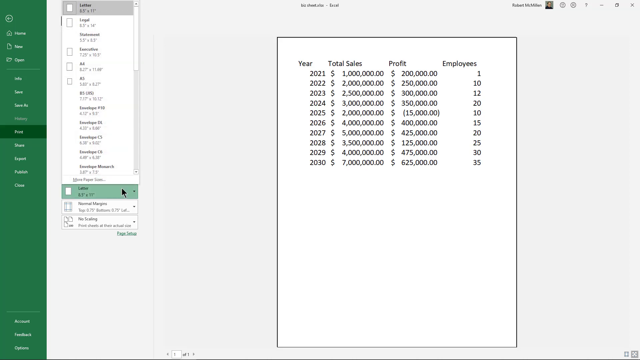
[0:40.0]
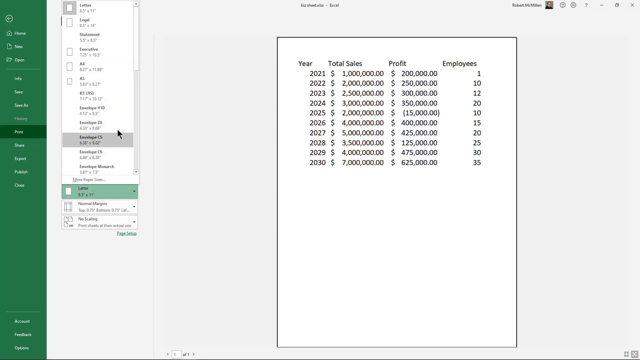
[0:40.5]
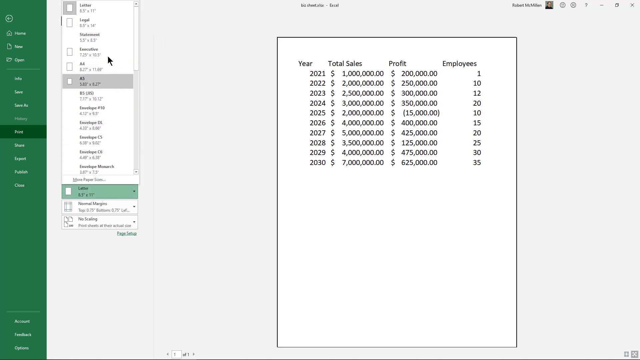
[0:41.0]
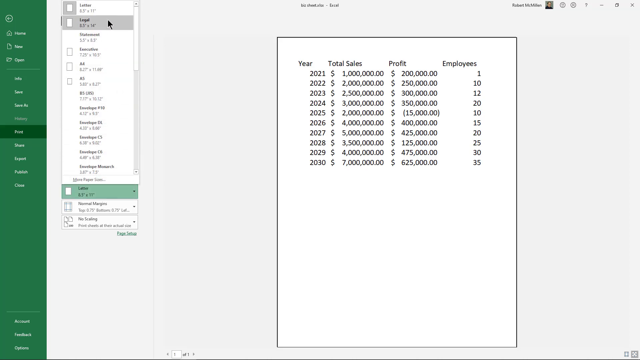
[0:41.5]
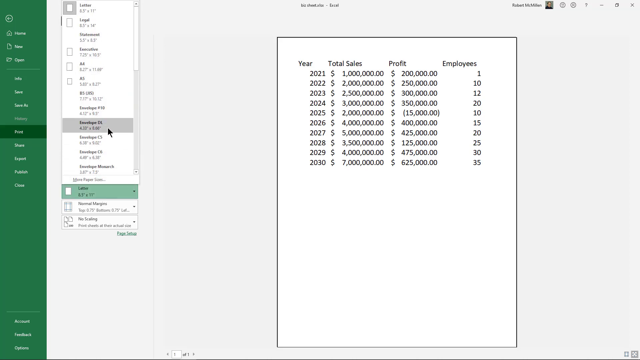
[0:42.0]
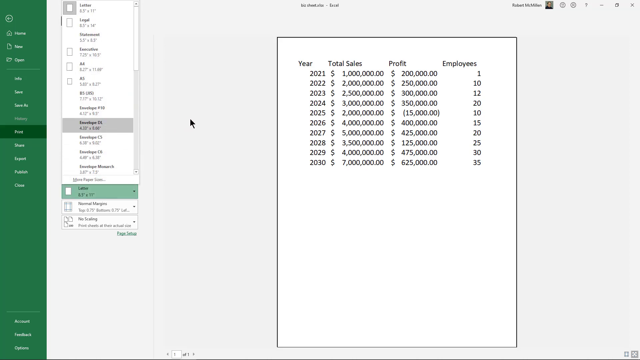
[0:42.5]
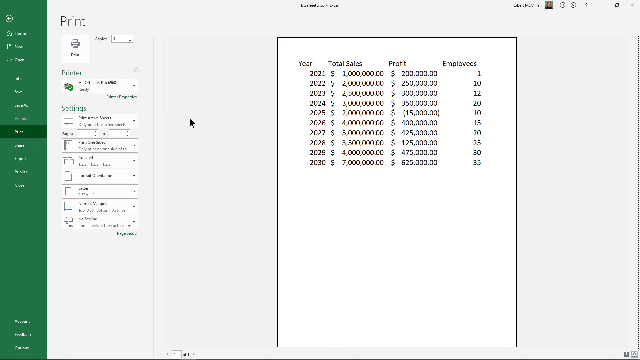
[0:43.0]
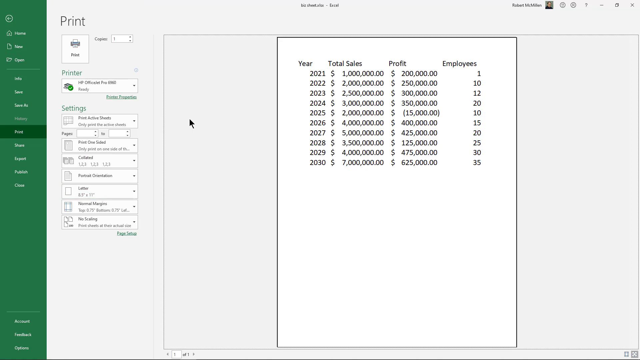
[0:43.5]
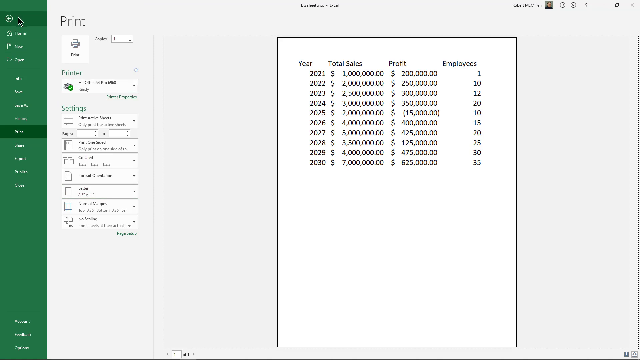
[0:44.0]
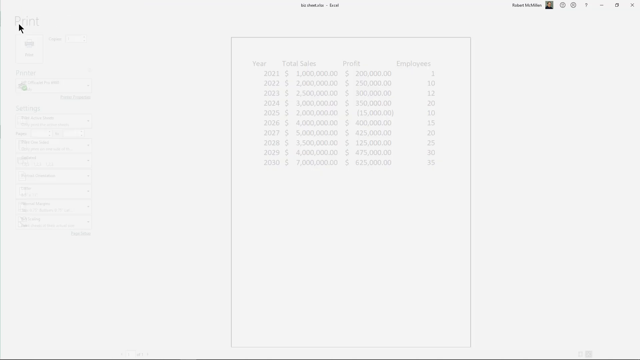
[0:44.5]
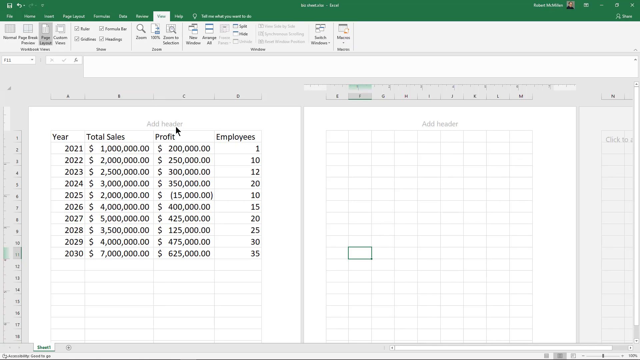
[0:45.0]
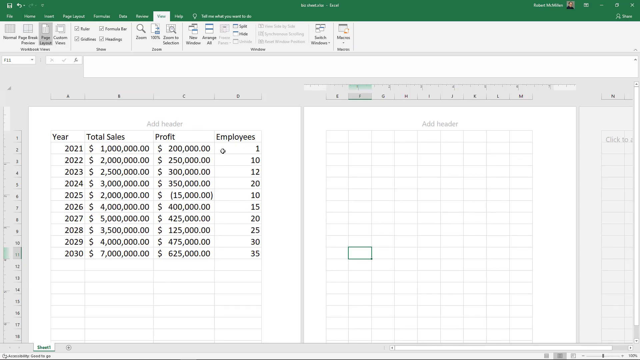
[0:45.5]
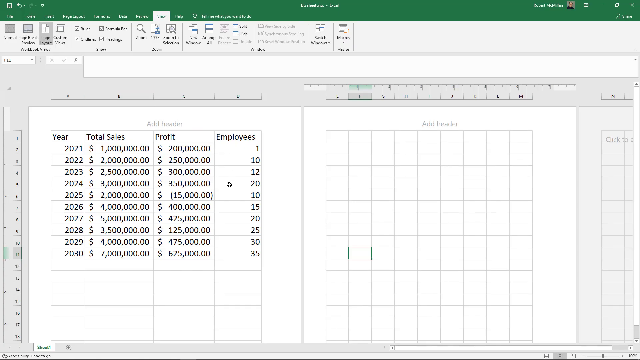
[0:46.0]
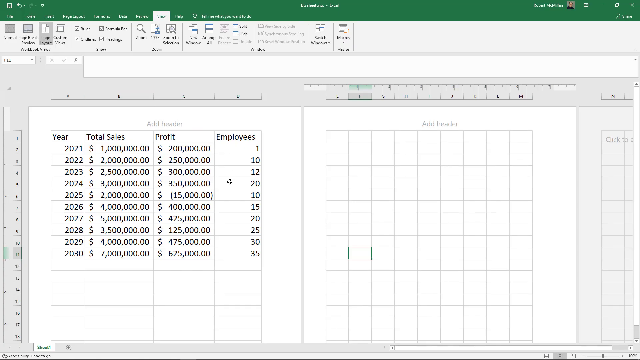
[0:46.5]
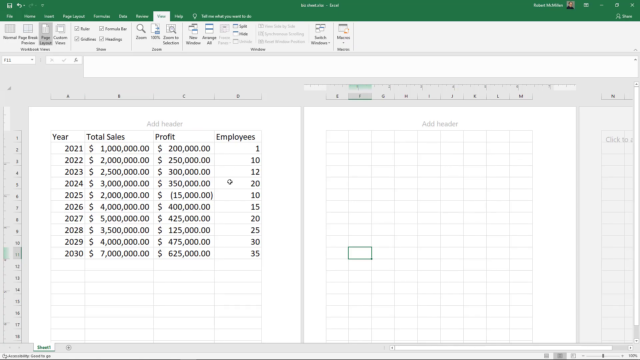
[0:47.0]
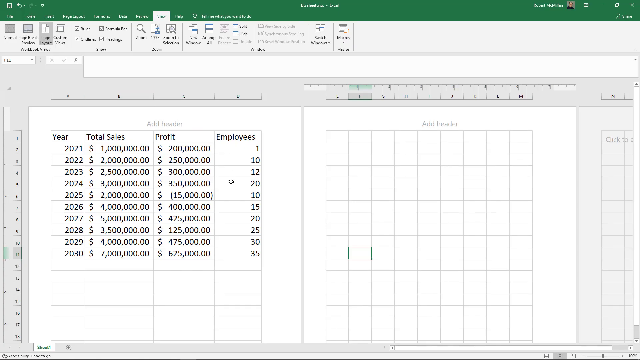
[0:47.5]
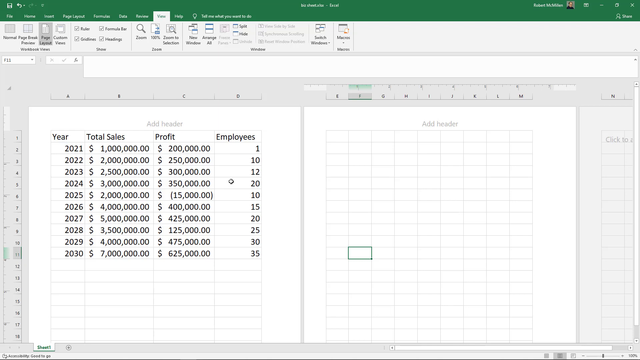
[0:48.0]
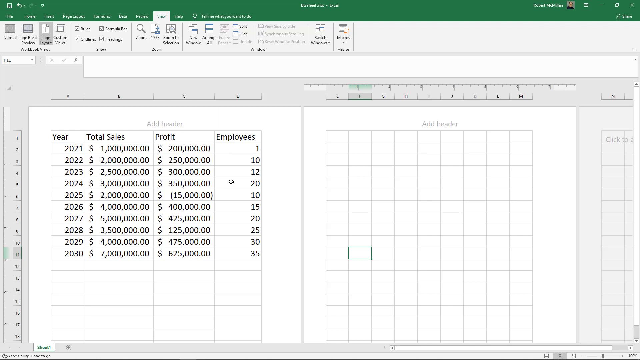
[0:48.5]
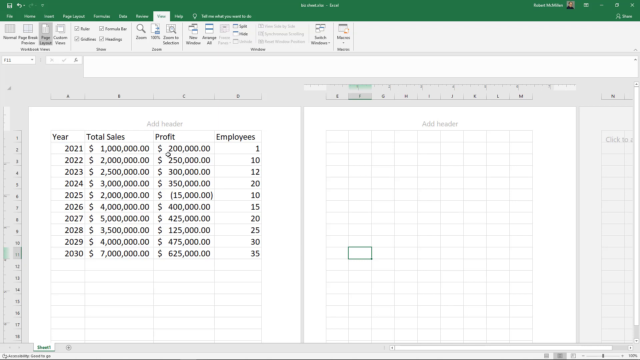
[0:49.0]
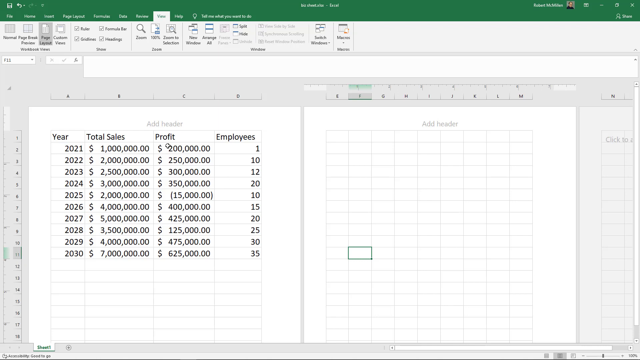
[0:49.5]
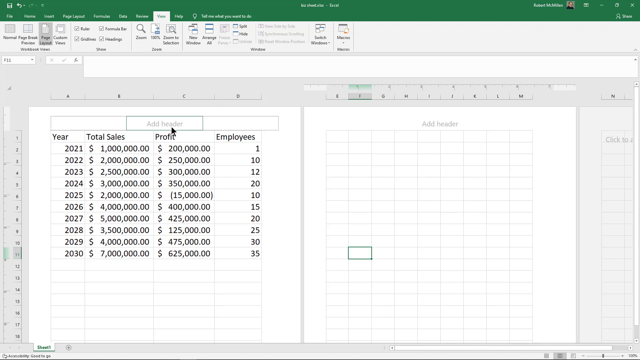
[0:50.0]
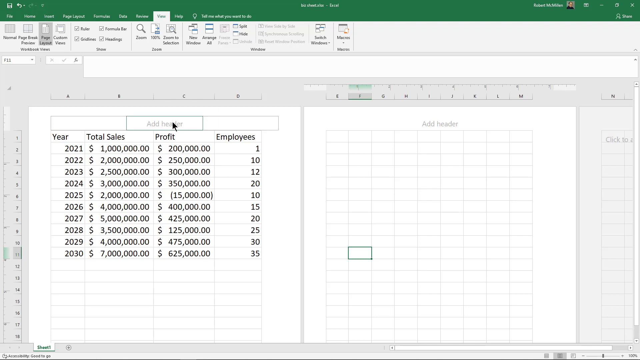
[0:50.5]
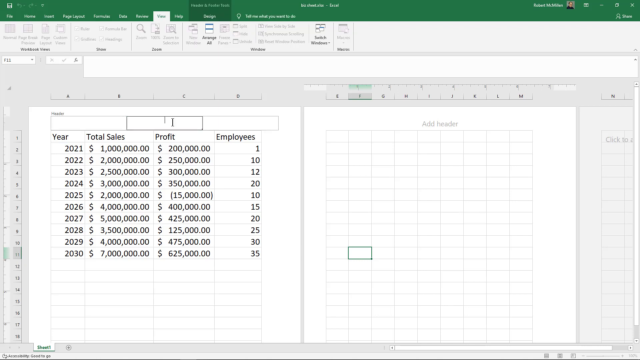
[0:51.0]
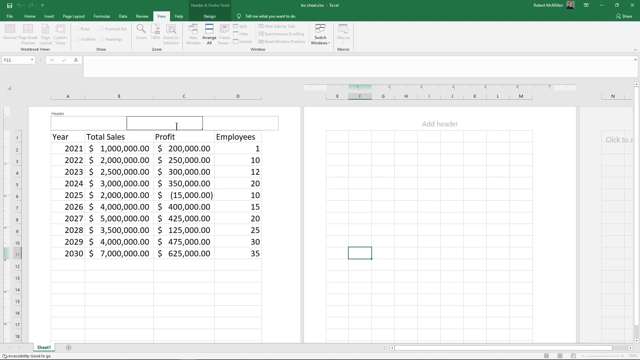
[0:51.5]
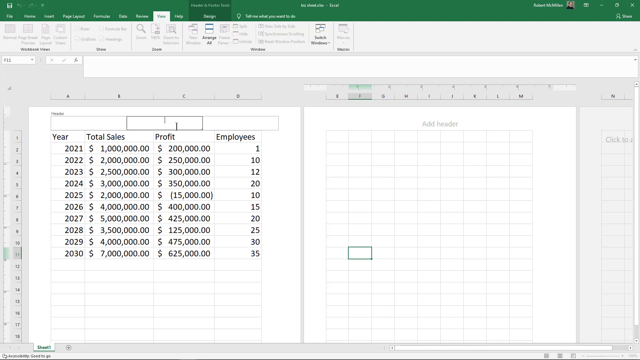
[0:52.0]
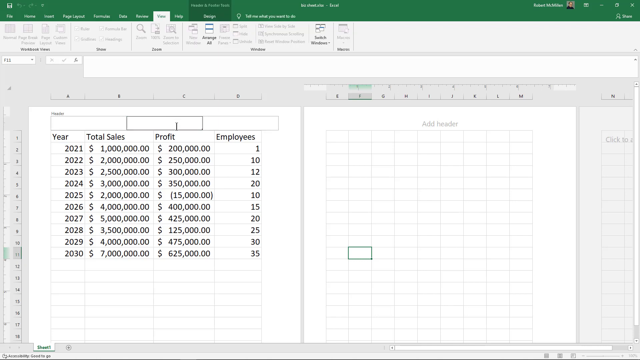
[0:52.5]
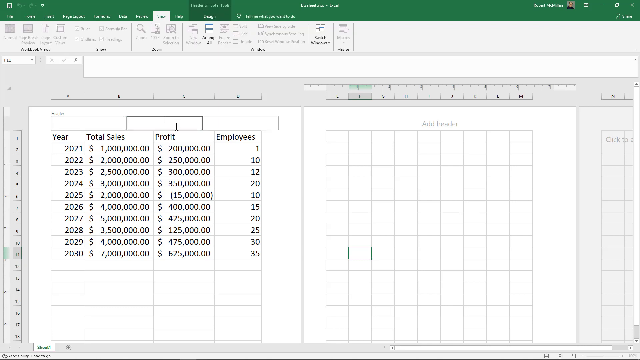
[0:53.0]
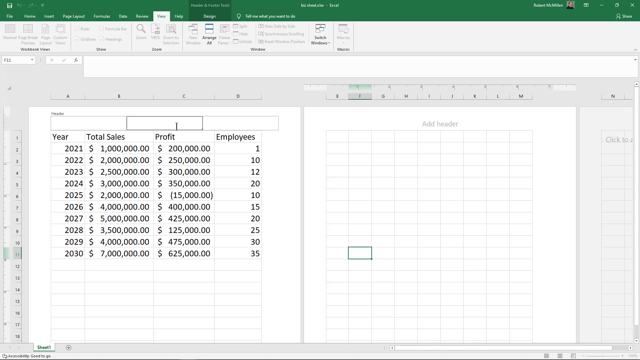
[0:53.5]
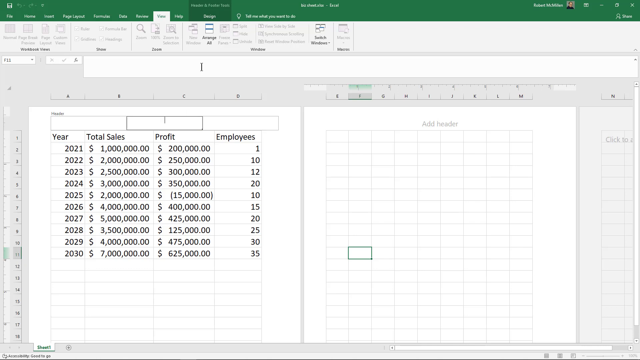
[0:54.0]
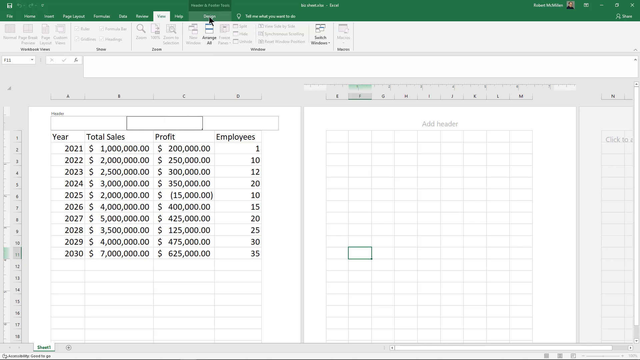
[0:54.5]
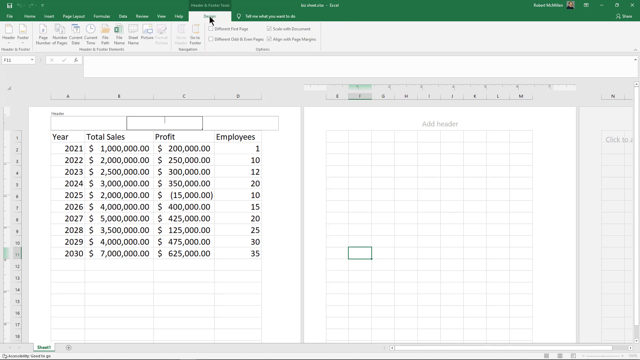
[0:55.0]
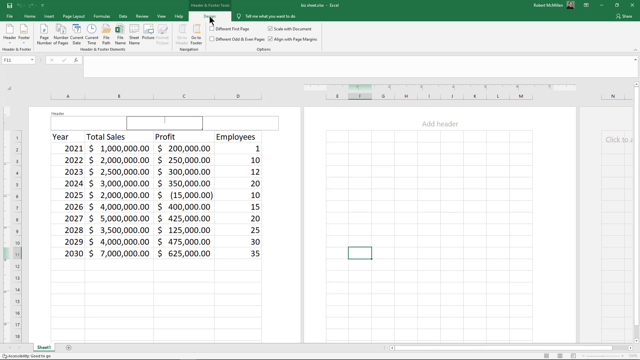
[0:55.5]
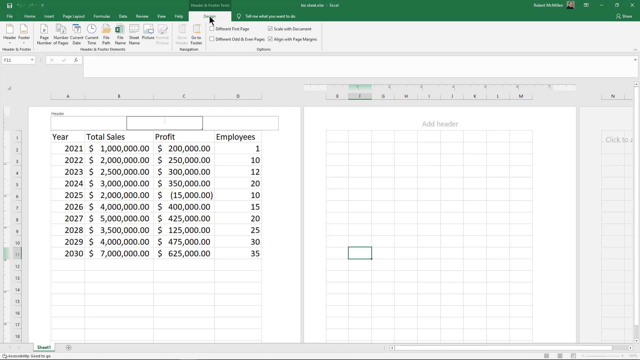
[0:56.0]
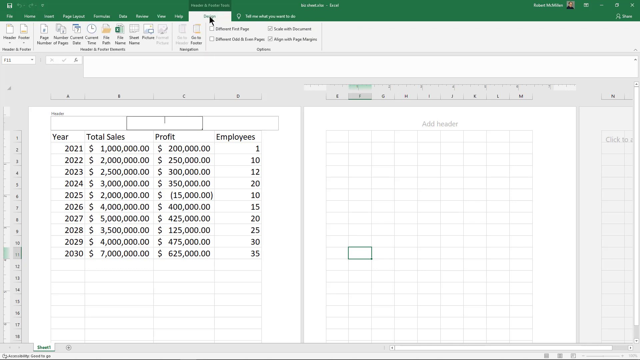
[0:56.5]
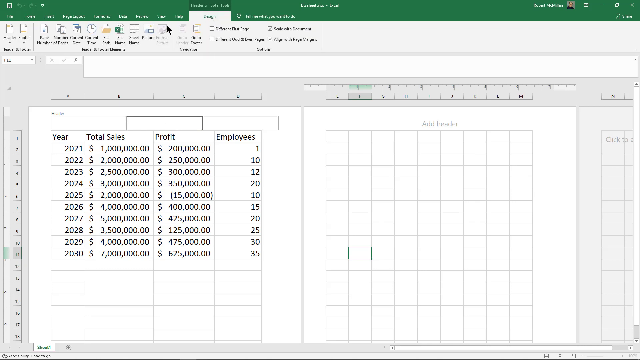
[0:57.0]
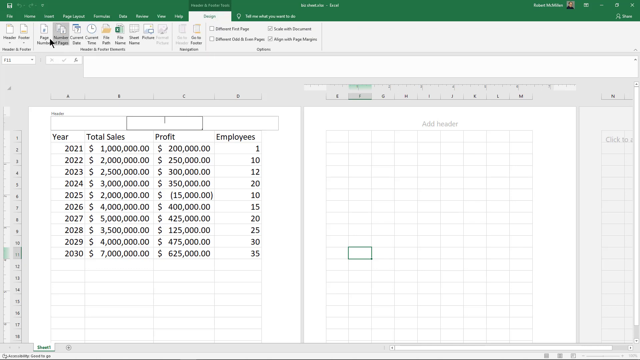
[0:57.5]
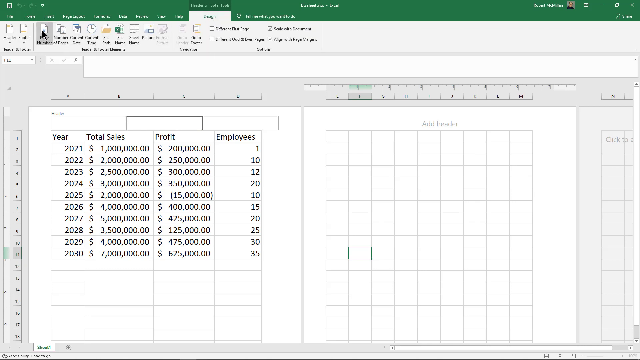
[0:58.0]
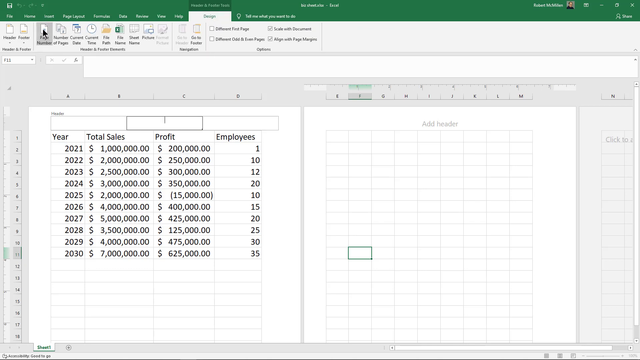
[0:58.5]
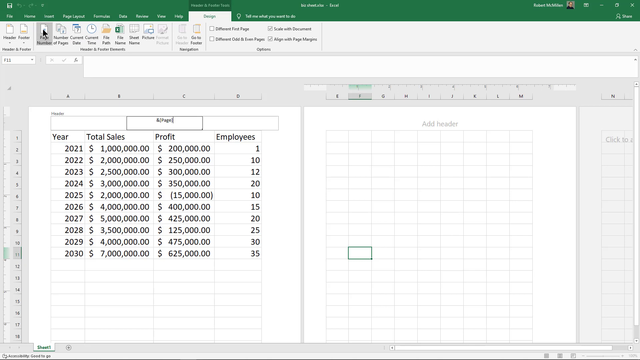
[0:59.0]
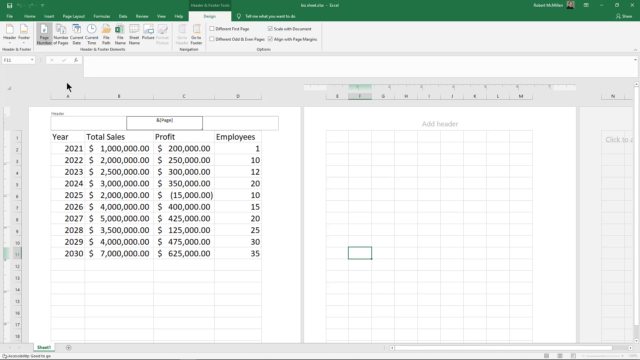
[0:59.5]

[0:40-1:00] A green menu is on the left side, and to its right is what looks kind of like a drop-down menu with many options, from which the user is selecting something. On the right side is what looks like a Word document with black text filling kind of the top quarter of the page. As the user tries to select an option from the menu, the option keeps getting highlighted in gray. Eventually they click an option on the yellow menu, and the view goes to a spreadsheet split in half: the left spreadsheet has text written on it and the right one is completely empty. The user hovers over the part of the left side that says "add header" and clicks on it, and it starts to blink. They then select an option from the menu at the top of the screen, which has a green bar as a background, and underneath it they click an icon that kind of looks like a sheet of paper.